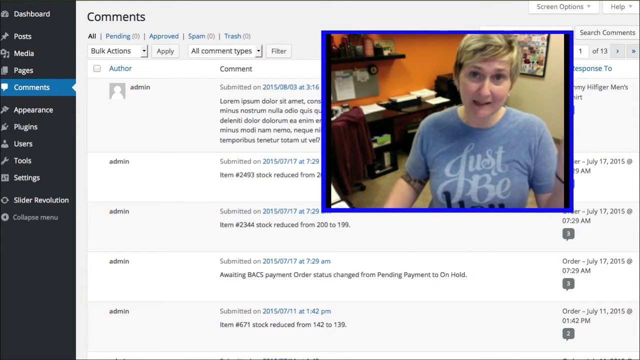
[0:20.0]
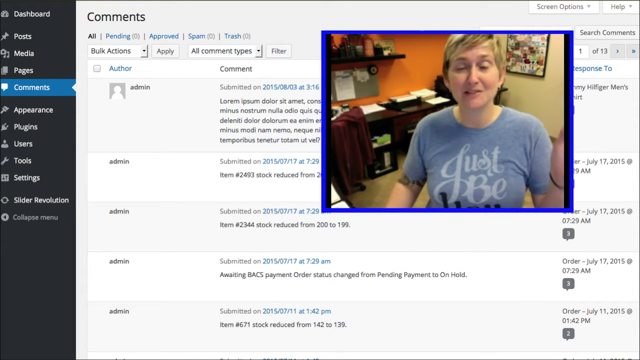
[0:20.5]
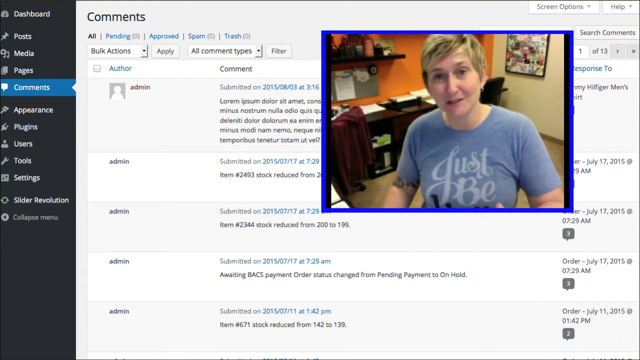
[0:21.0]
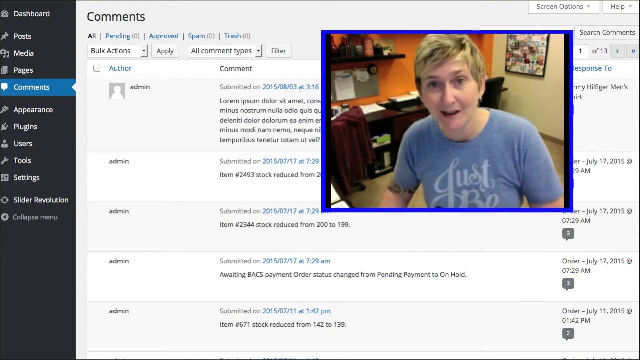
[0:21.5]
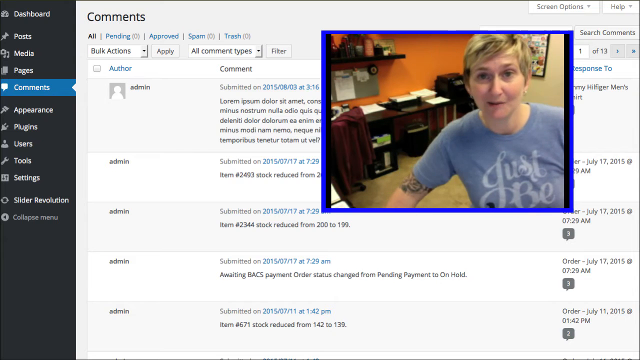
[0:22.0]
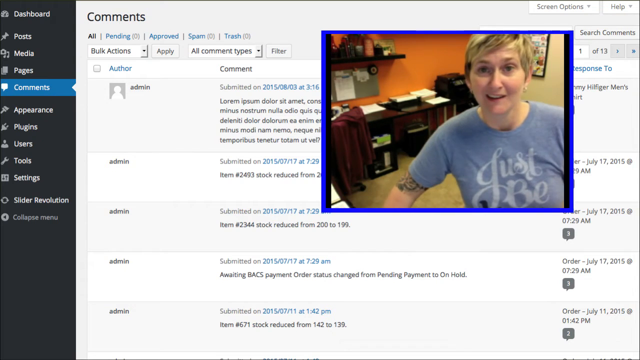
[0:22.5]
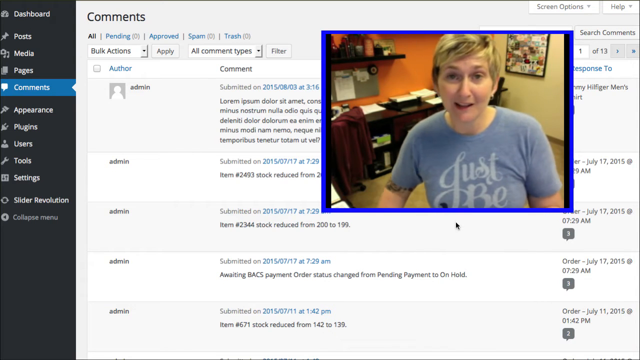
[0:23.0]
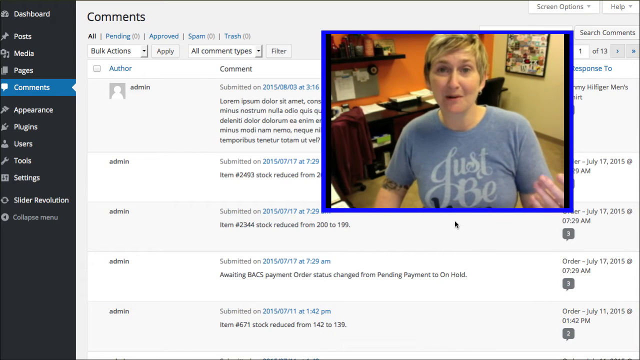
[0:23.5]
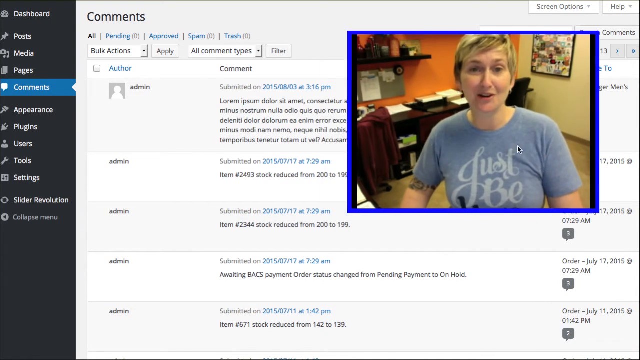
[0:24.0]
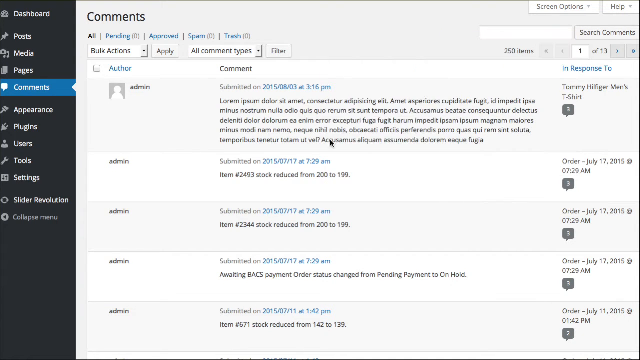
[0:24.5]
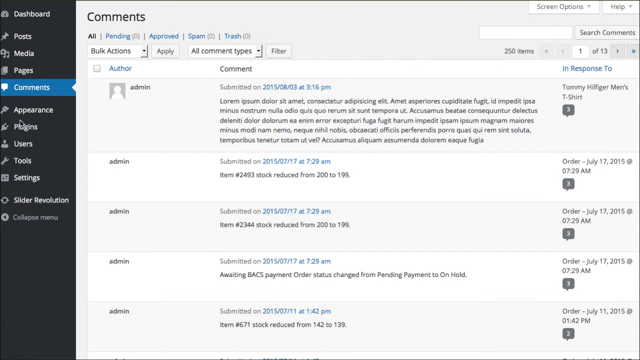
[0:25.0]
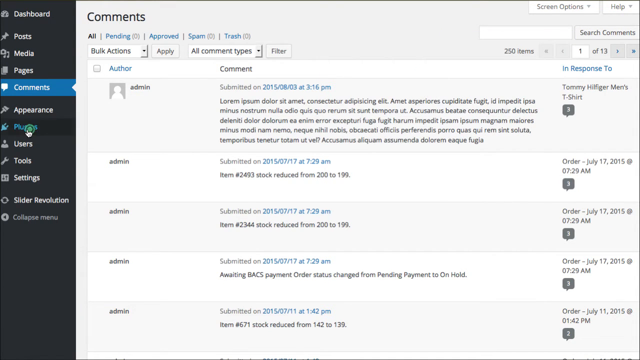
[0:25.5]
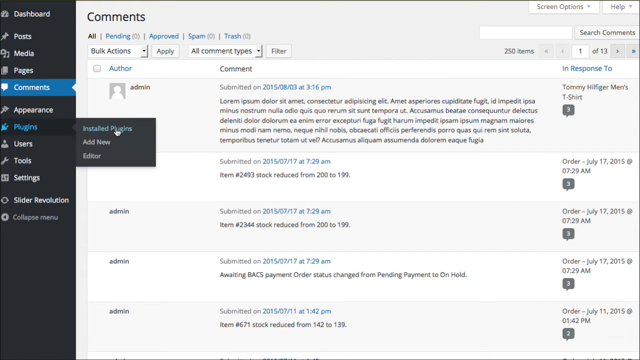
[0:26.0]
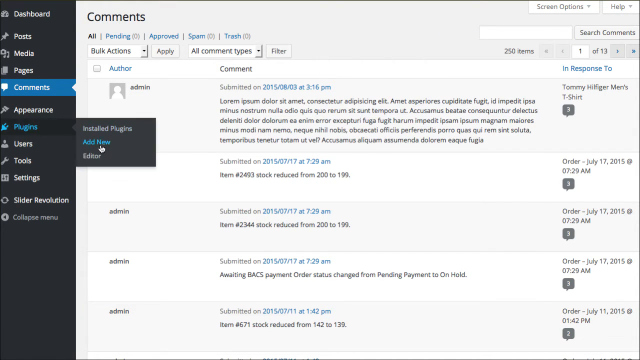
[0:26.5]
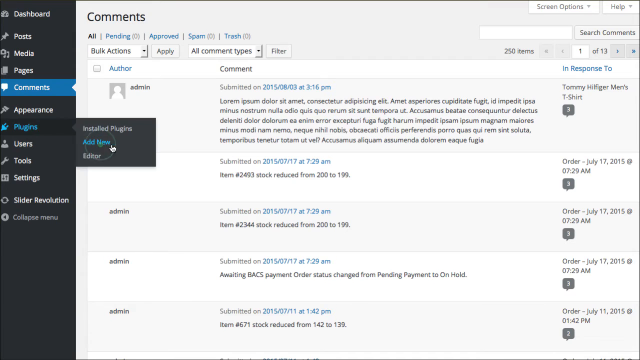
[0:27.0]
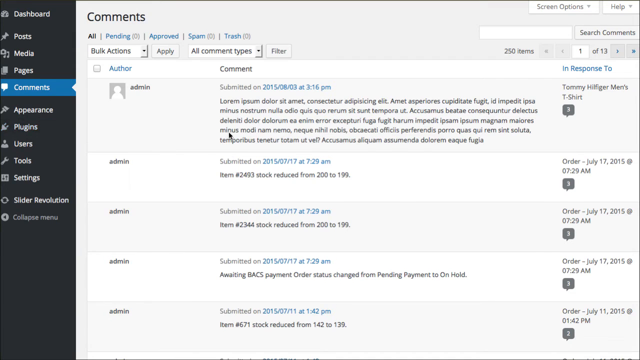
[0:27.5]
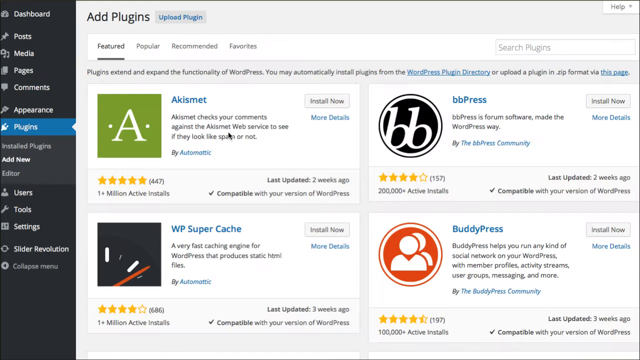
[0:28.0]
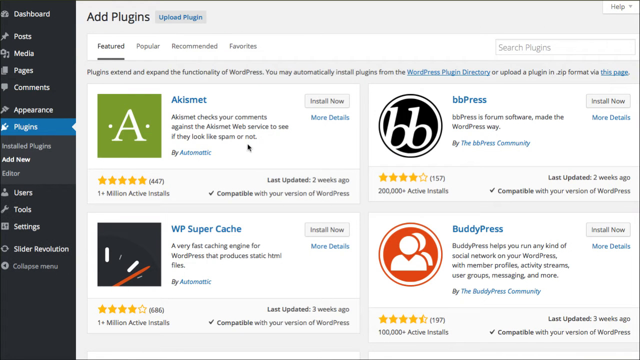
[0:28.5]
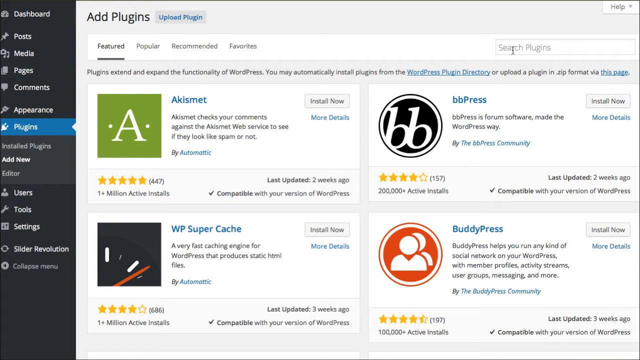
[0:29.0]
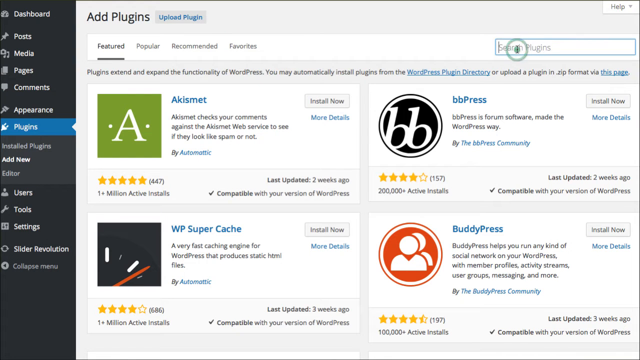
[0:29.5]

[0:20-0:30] The screen remains the same: the black dashboard with white text, the white page with black comments, and the blue-bordered video in the upper right. The woman in the light blue t-shirt is still talking to the camera. She has her left hand raised, palm facing inward and fingers extended, then moves it down. She sways to her left and then back to her right, and appears to be leaning with her right forearm on a table that is out of shot at the bottom left of the video. The user on the computer then drags the video to the right and out of view. They move the mouse to the left-hand side of the dashboard and click "plugins", which opens a black pop-up, and then click "add new". Generic plugin results appear. The user moves the mouse to the top right corner of the screen and clicks the search plugins button.